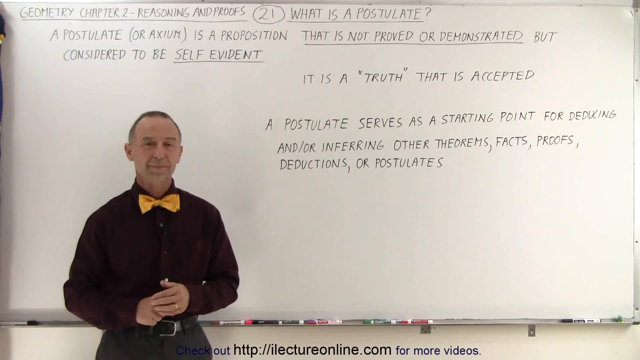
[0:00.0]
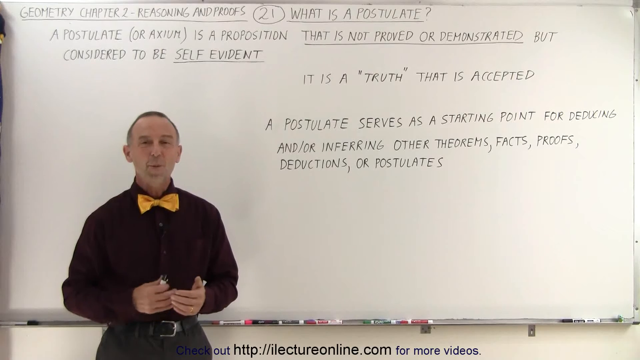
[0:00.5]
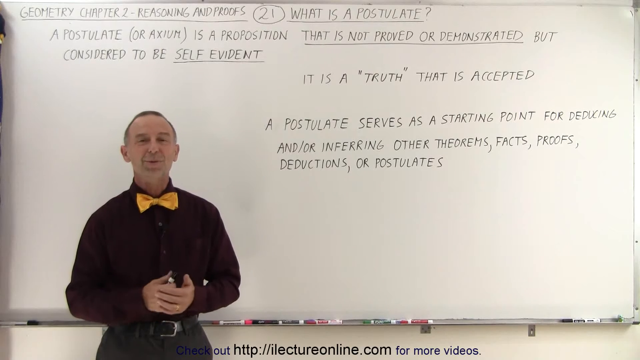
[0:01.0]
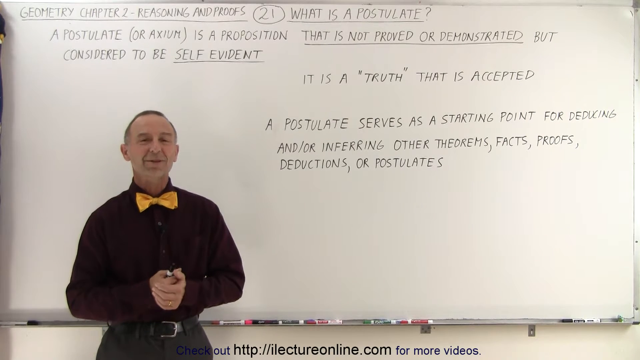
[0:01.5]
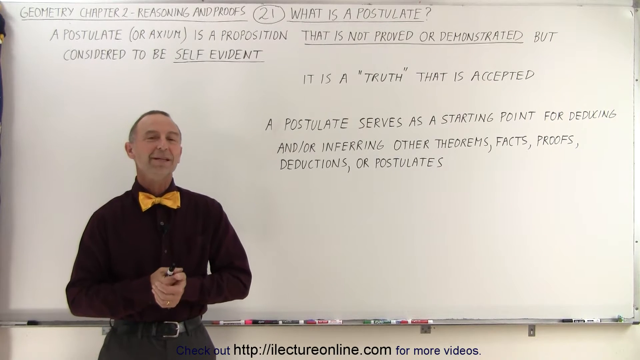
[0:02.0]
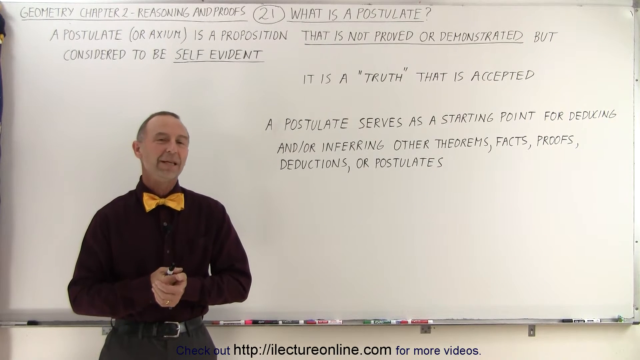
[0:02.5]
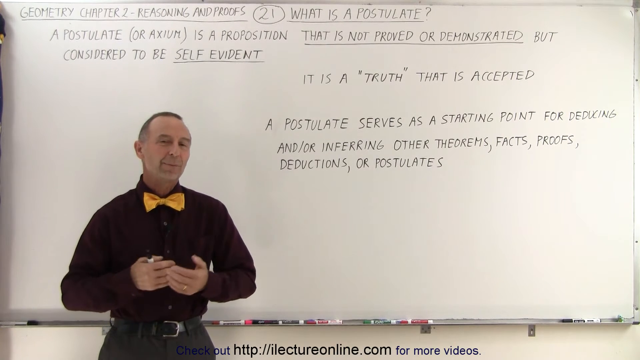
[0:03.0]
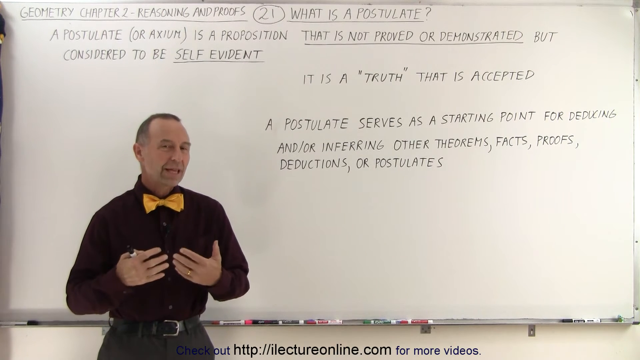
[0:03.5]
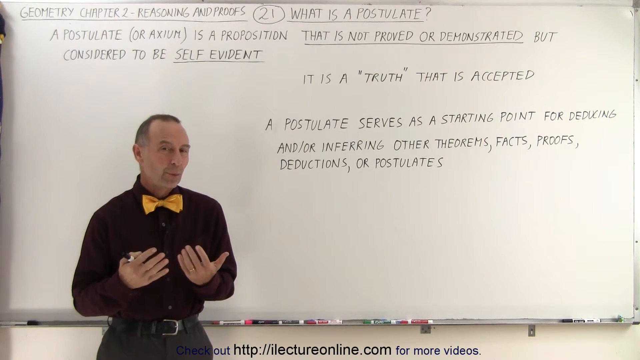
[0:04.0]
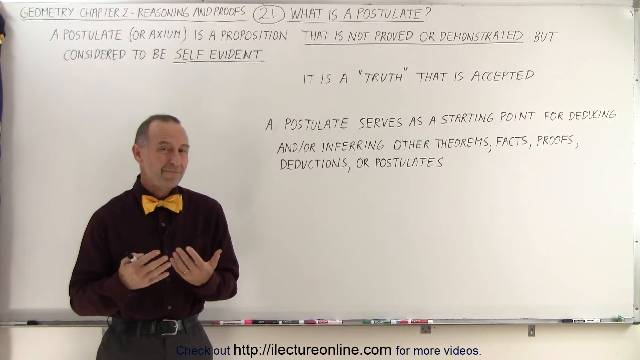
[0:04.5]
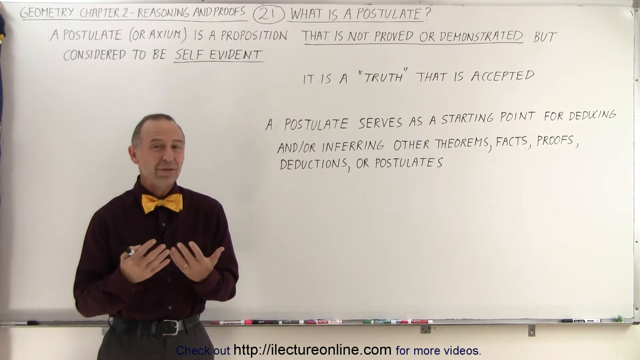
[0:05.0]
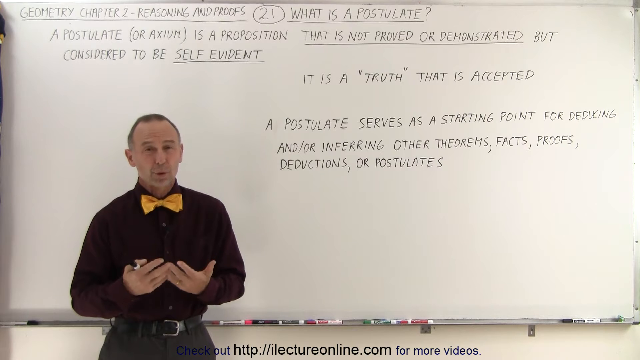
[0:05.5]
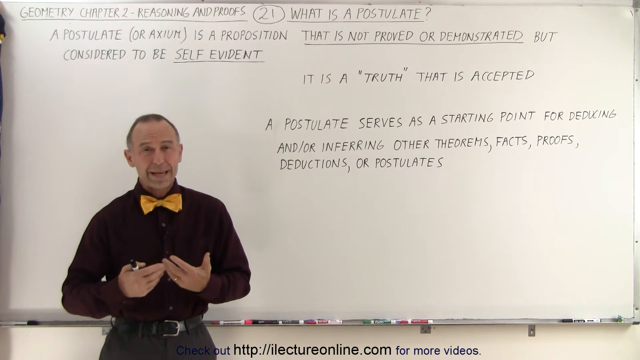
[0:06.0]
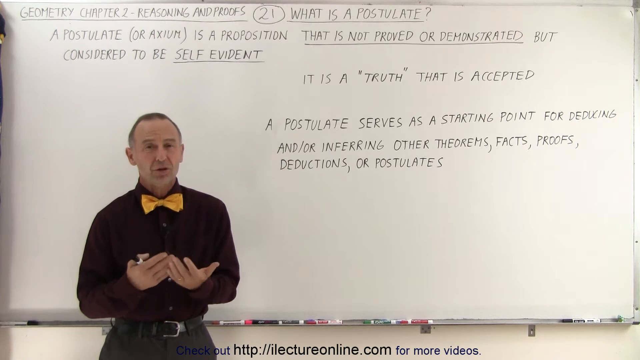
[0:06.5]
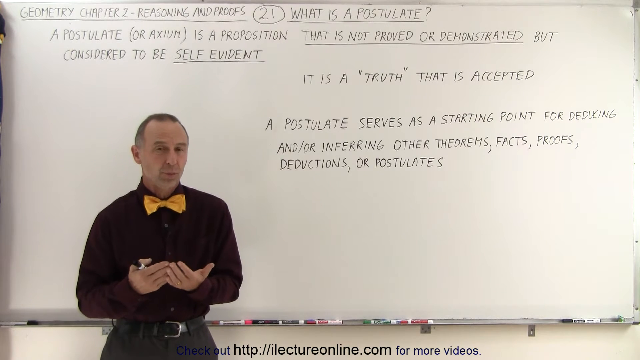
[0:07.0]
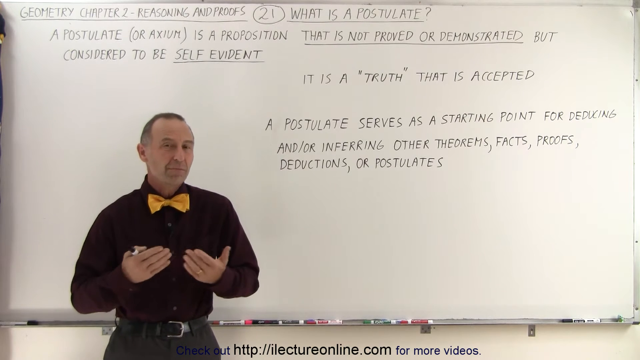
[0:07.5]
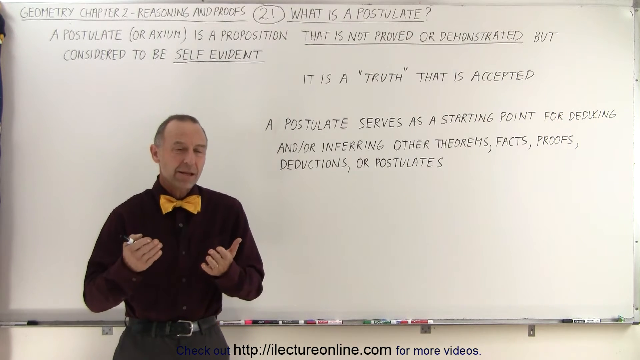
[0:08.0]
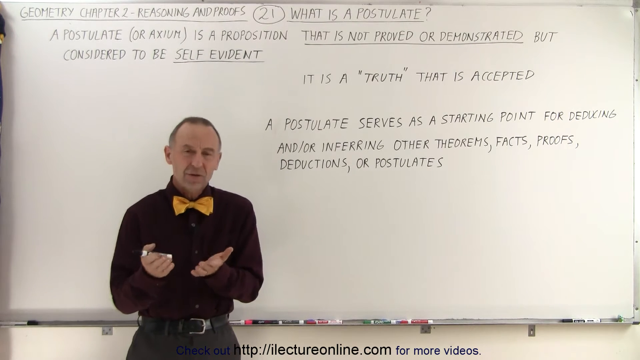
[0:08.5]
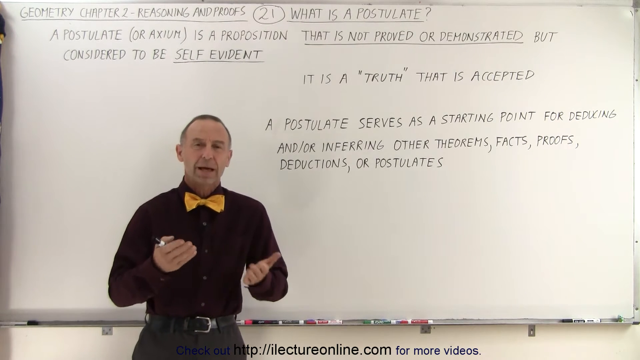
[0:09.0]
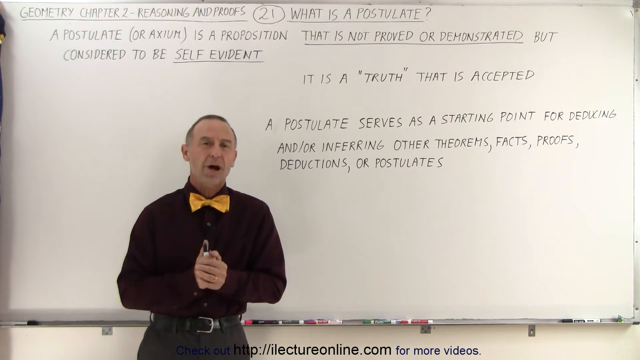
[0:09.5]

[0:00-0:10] An older man in a black shirt and an orange bow tie stands in front of a whiteboard, giving a lecture. The writing on the whiteboard contains geometry information: it addresses what a postulate is, gives a definition of a postulate, and includes some other supporting information about postulates. The man, presumably a math teacher, talks in front of the board, just getting started with his lecture. A URL, "iLectureOnline.com", appears at the bottom of the screen.